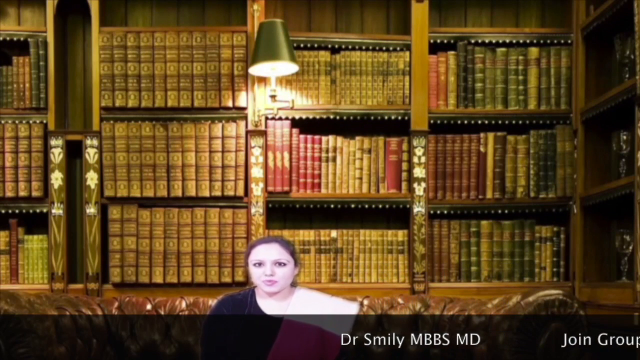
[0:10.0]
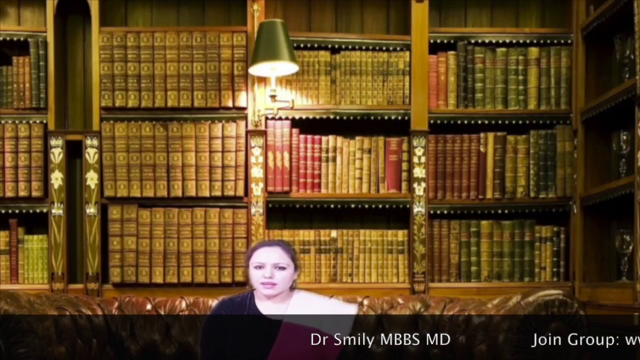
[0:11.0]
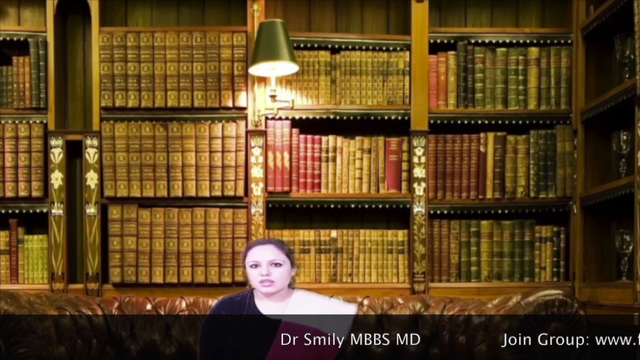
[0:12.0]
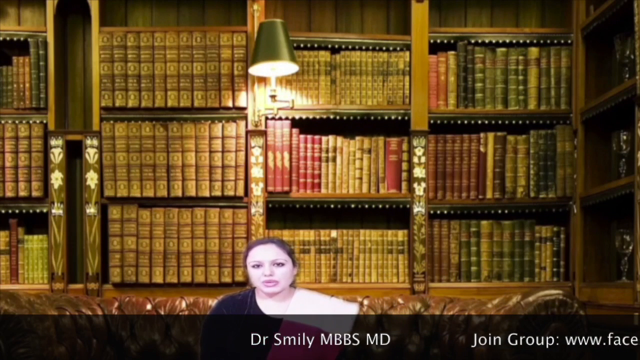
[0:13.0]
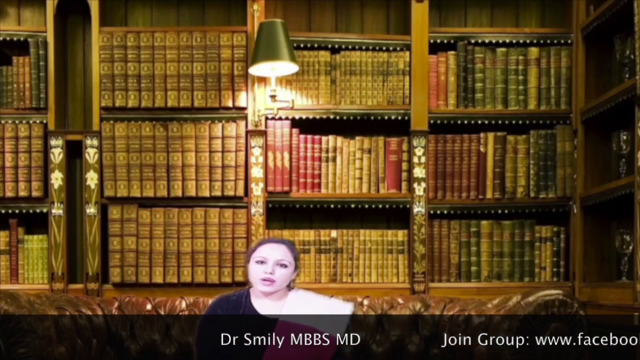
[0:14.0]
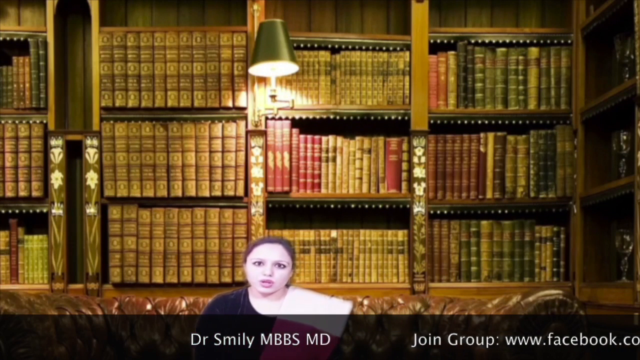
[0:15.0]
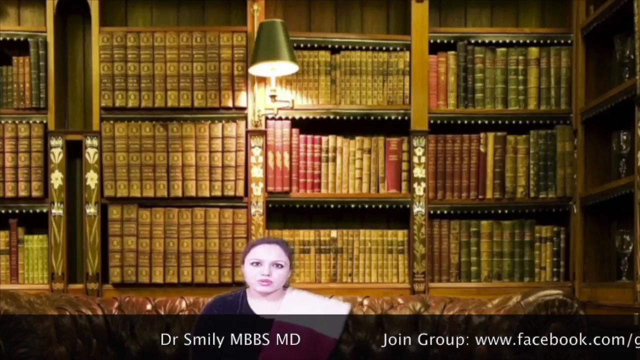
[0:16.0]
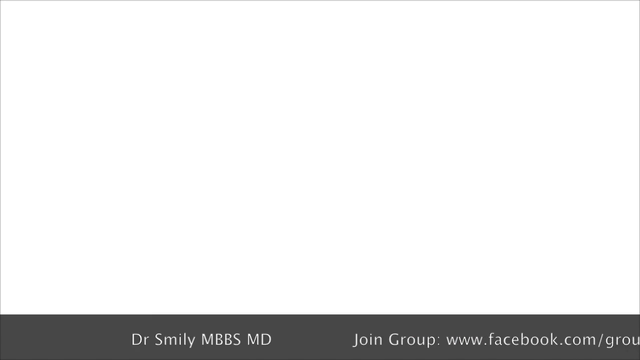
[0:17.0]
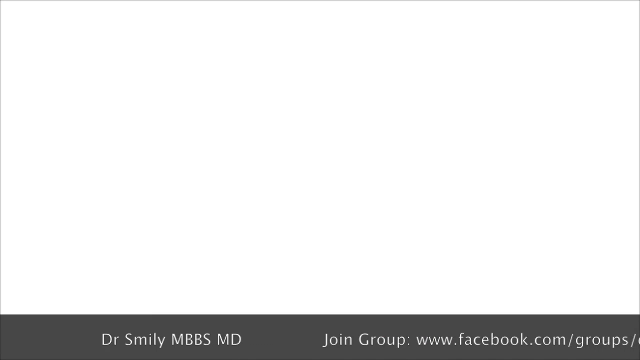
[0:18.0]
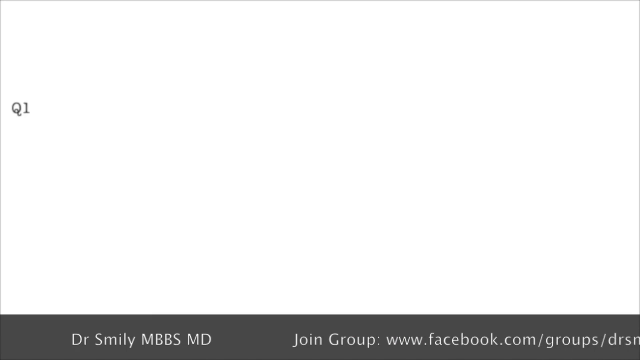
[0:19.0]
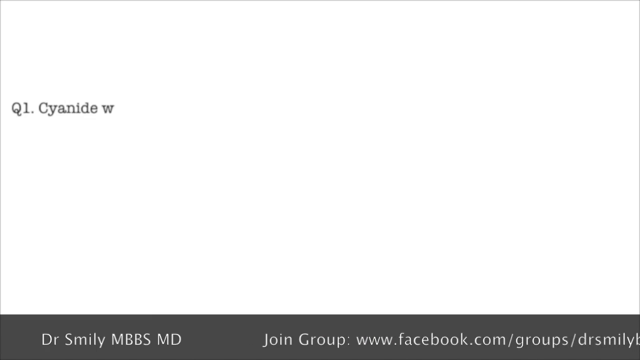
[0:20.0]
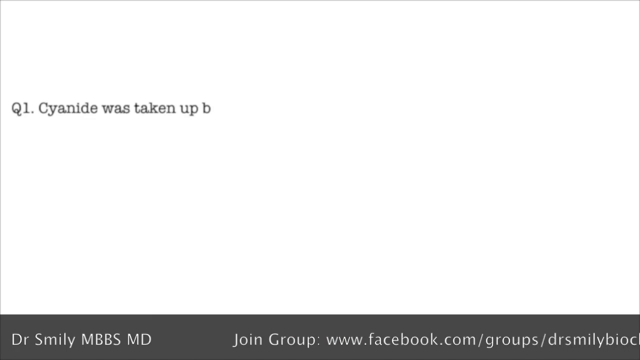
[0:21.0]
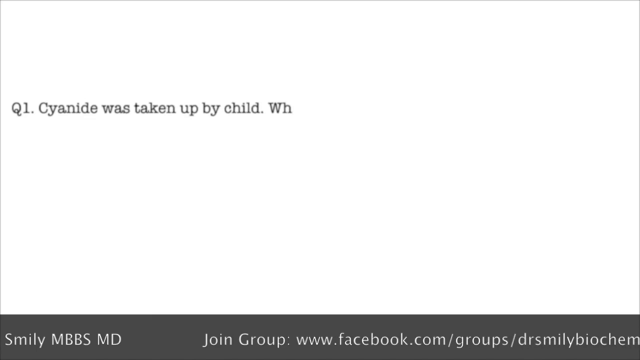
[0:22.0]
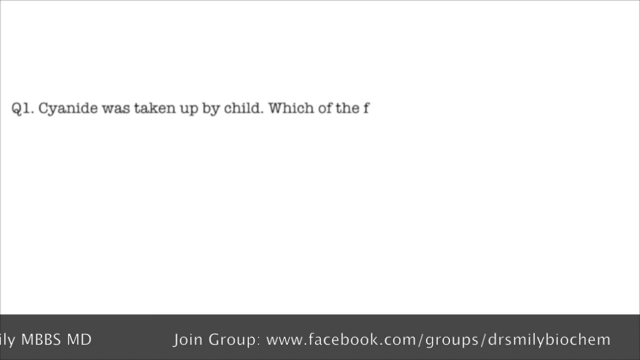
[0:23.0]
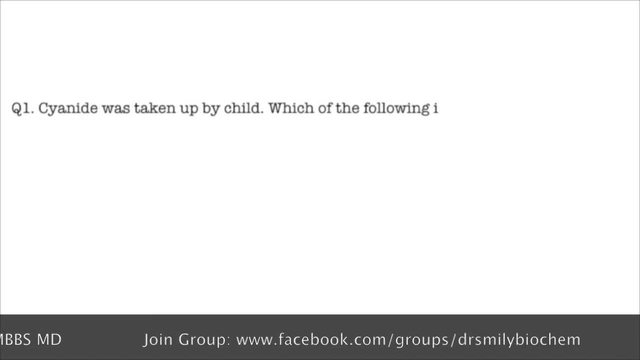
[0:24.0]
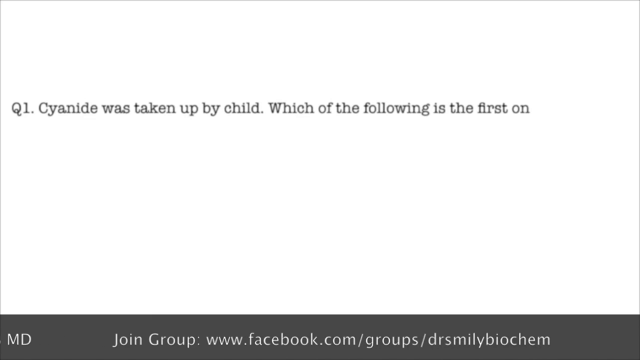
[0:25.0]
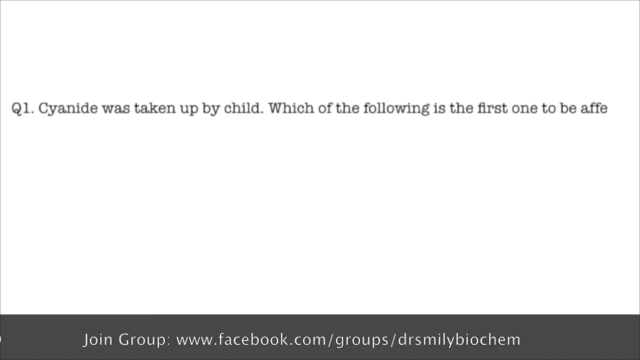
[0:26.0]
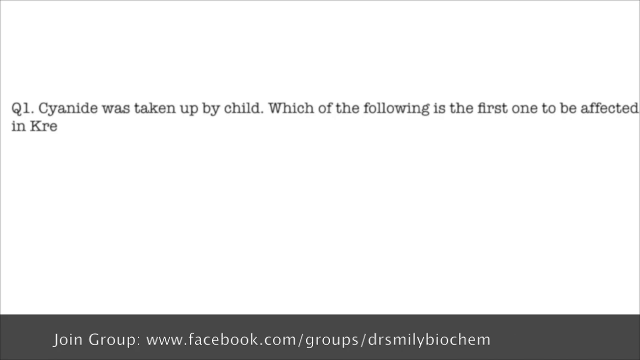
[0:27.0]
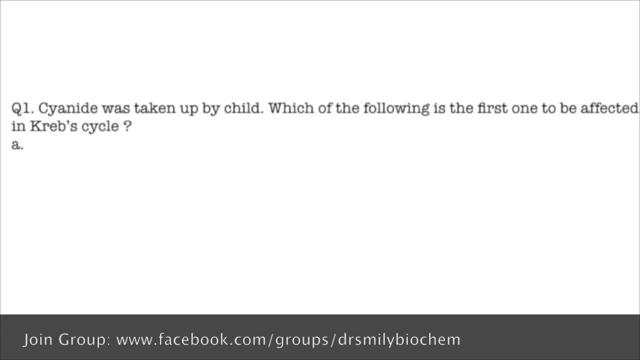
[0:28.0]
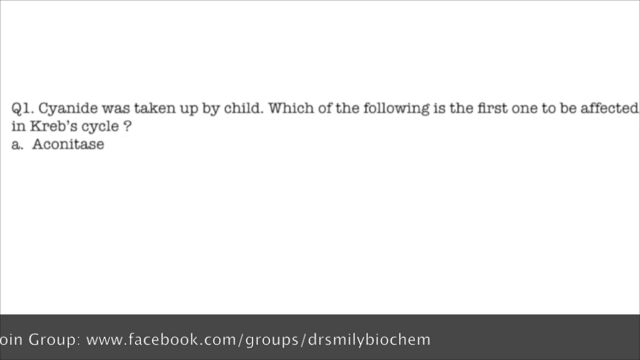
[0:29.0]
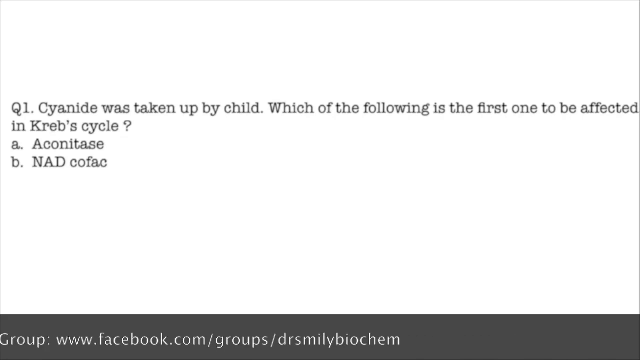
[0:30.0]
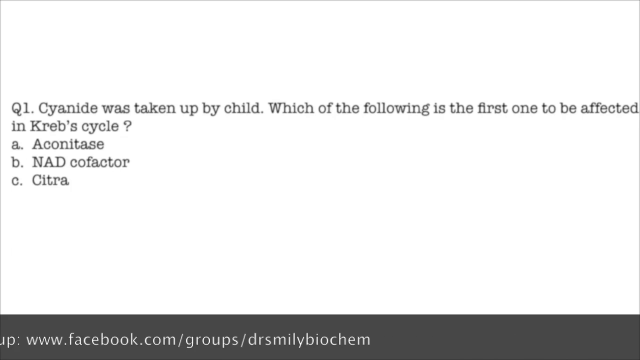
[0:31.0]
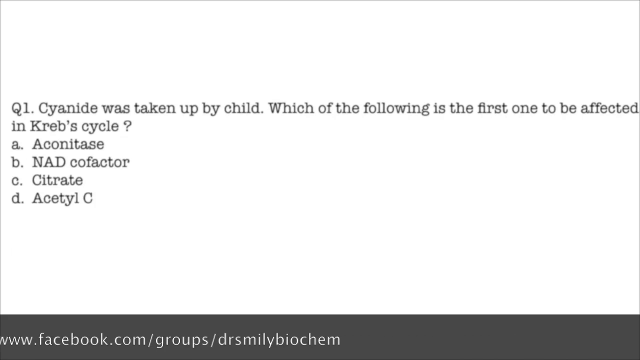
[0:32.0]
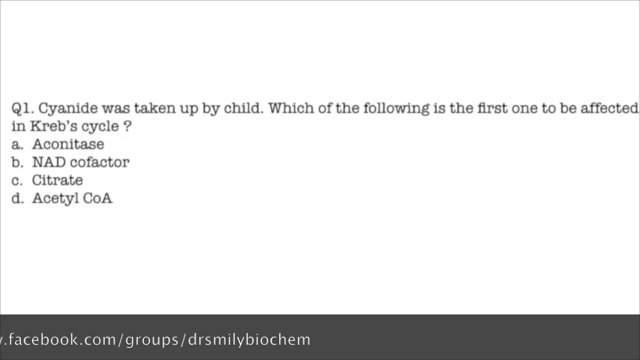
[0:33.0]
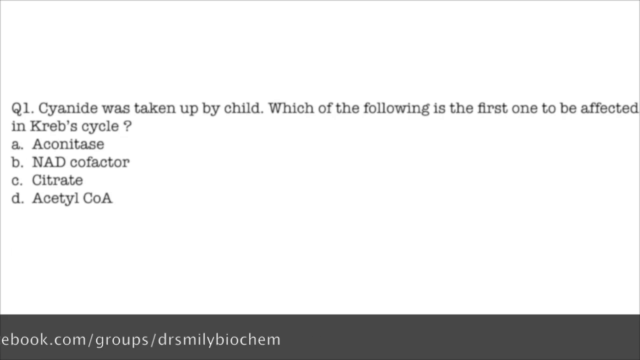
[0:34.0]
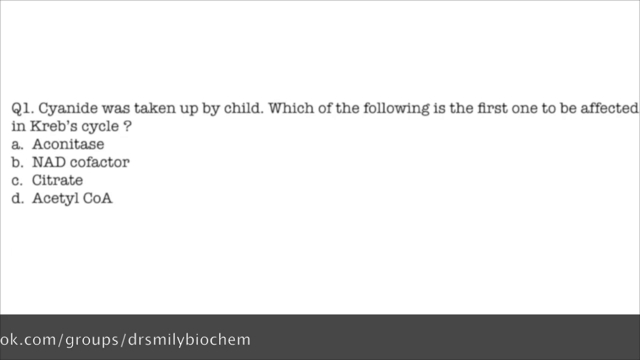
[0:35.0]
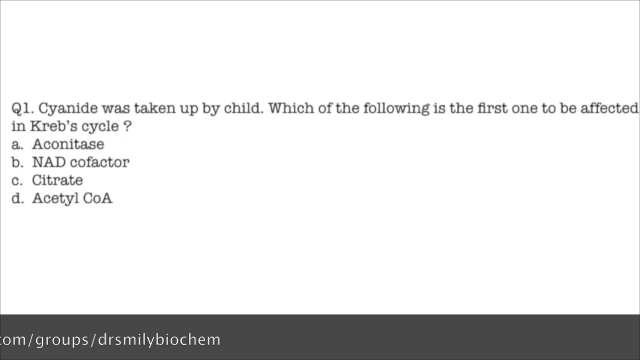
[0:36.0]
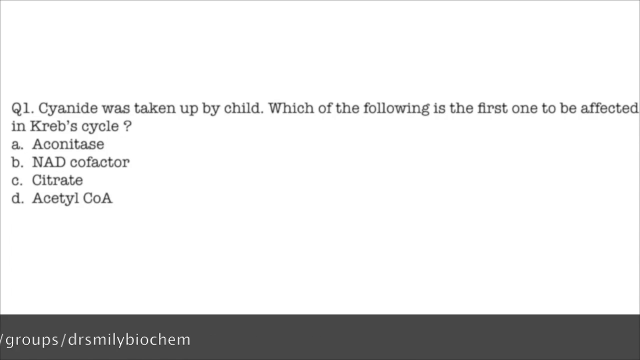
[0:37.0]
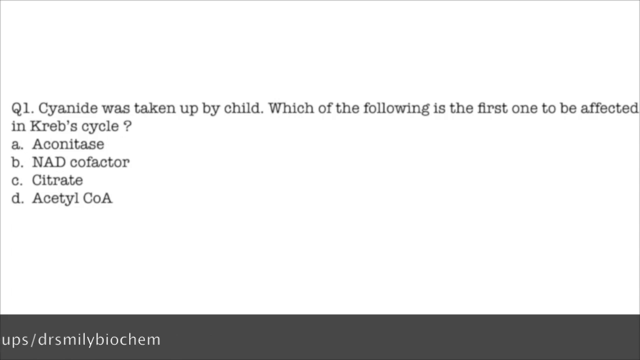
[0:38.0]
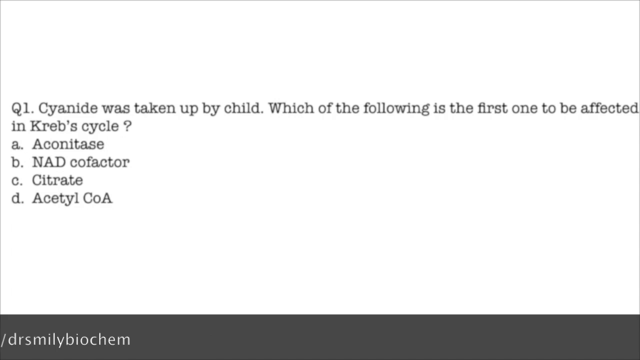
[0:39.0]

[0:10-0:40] The young woman appears very low on the screen. The image behind her, a fake backdrop of a library, seems out of proportion in size. She is sitting on a leather couch, and it is unclear whether the couch is real and only the backdrop is fake, or whether the entire image is fake. Text scrolling across the bottom reads "Dr. Smiley" and gives a Facebook.com group. The screen suddenly turns white and a question is listed: Question 1 asks what is the first to be affected in the Krebs cycle, with answers A, Aconitase; B, NAD cofactor; C, citrate; and D, acetyl-CoA, all listed on the screen.